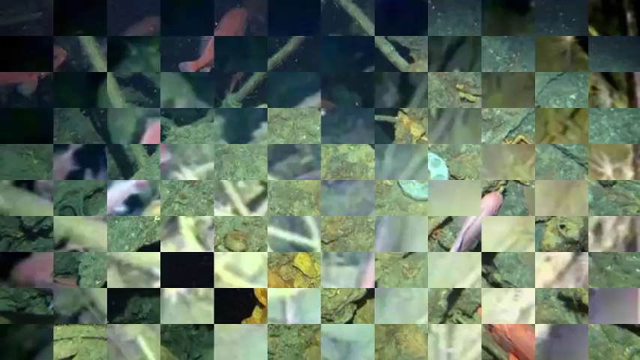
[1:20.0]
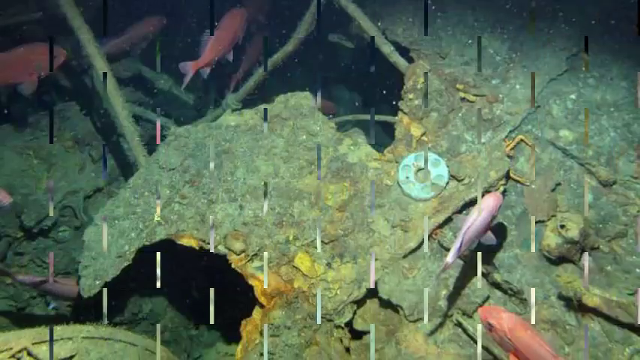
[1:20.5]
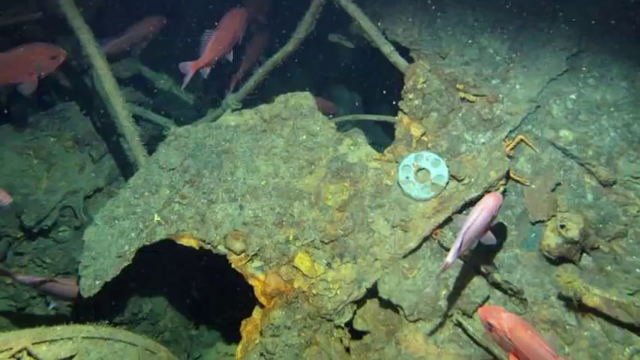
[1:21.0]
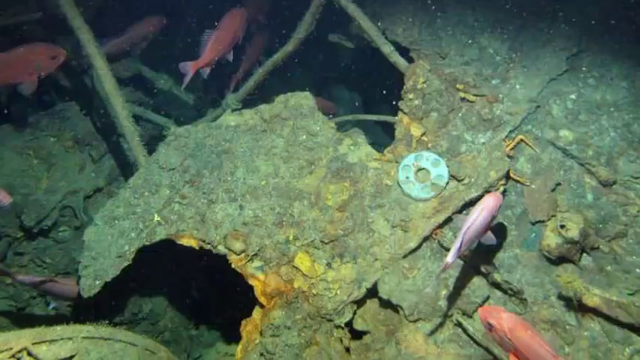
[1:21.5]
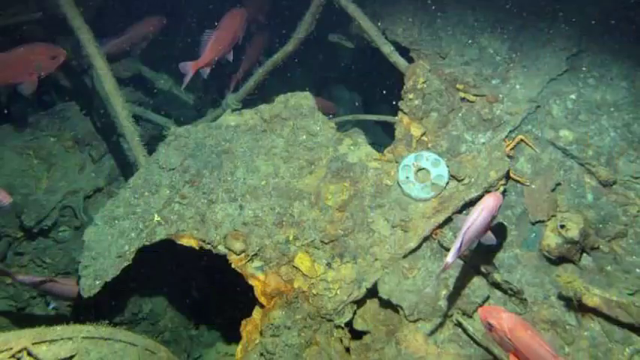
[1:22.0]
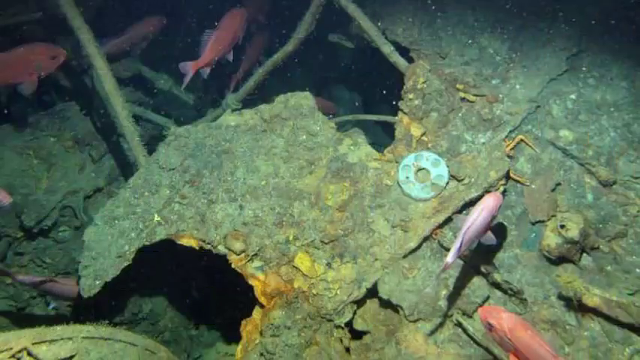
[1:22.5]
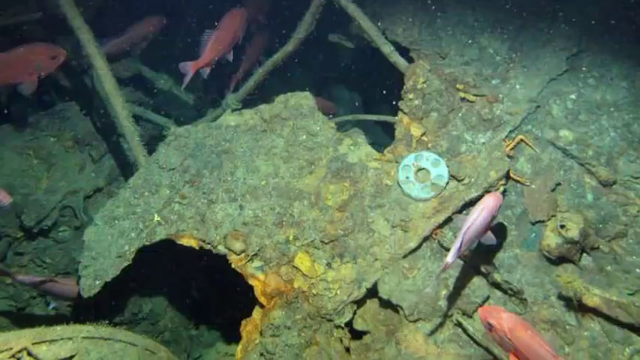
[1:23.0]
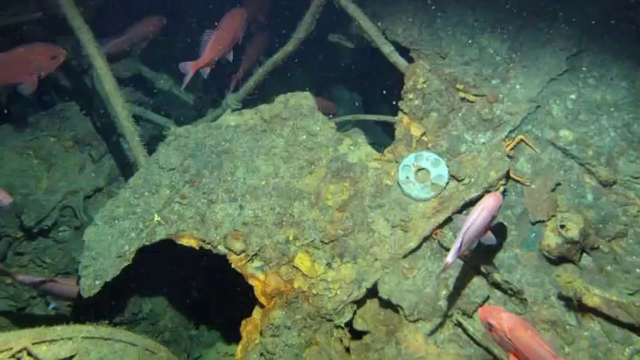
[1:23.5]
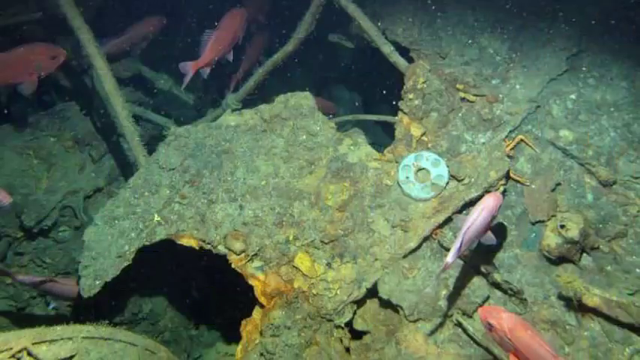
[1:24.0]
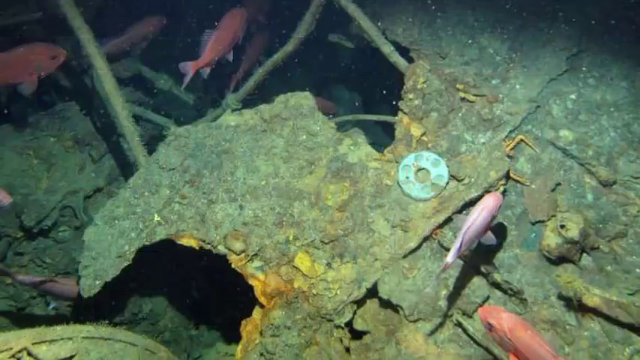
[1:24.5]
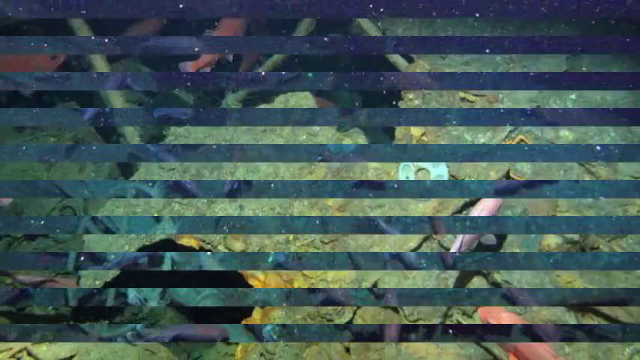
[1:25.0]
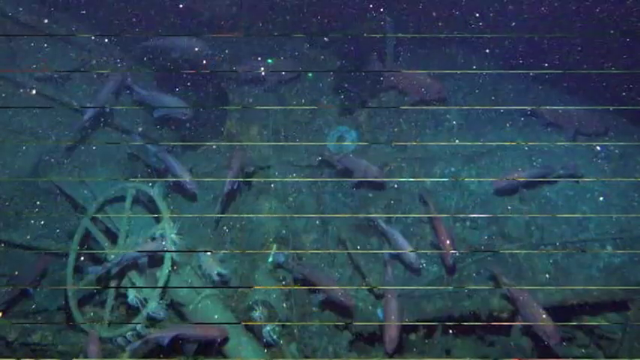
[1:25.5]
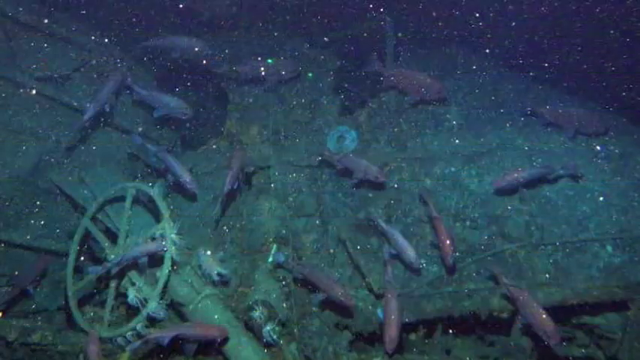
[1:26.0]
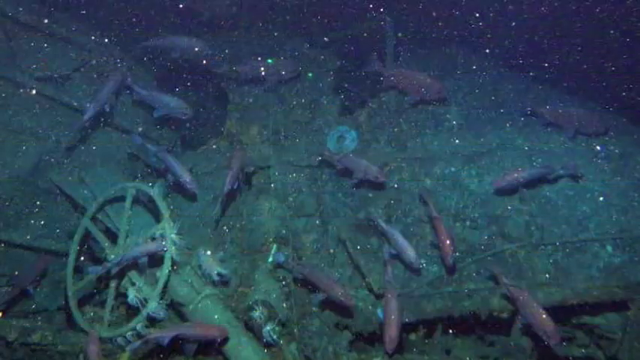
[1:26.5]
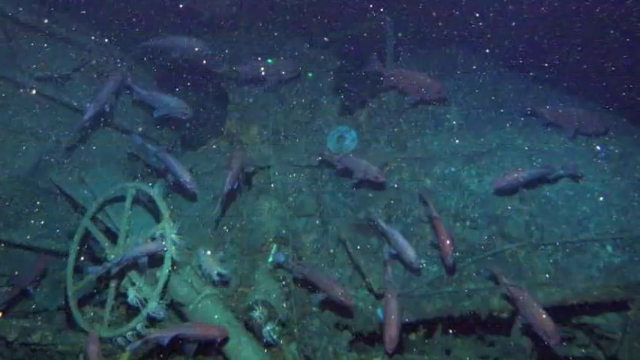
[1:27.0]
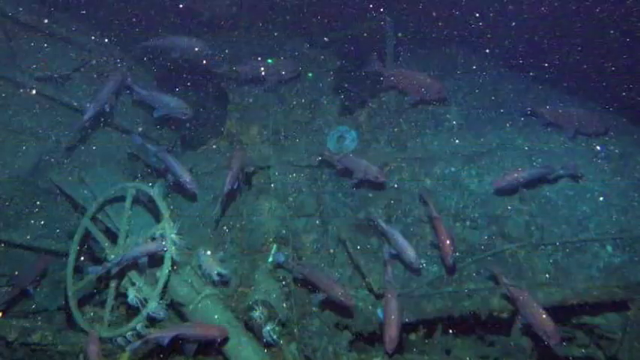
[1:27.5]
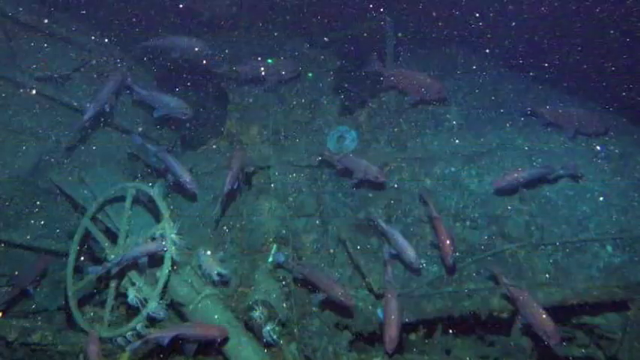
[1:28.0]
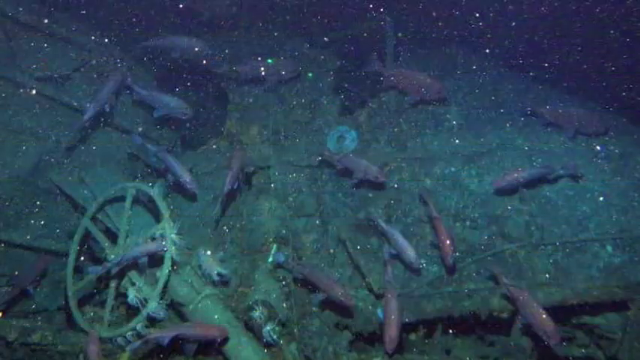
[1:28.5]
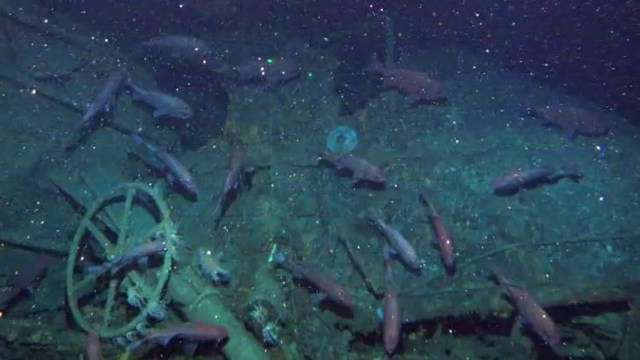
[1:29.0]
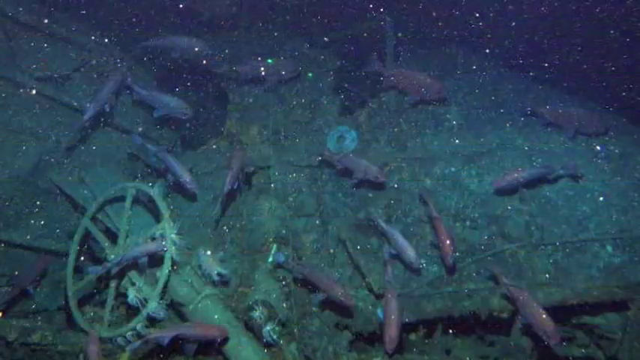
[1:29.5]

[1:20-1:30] An animation displays a new, zoomed-in, quite high quality image of the same ring shape on top of the wreckage, with red fish swimming in the background. In the bottom left corner there is a black gap between some of the remnants of the ship where the light does not reach; where the light does reach, a green and yellow growth that is rocky and spiny is visible. This barnacle-like growth covers the entire ship and wreckage, covering every surface. The video then transitions to another image of a steering wheel and the donut-shaped metal plate, with many fish swimming around and a starburst-like effect.